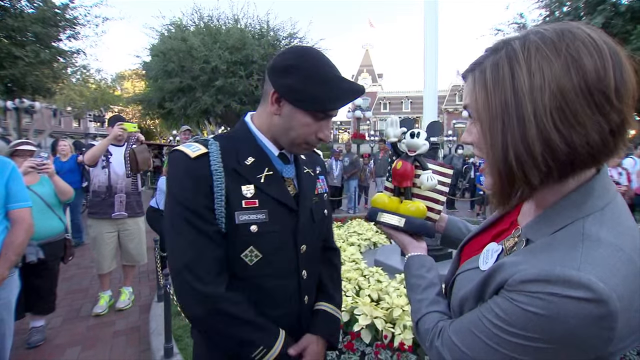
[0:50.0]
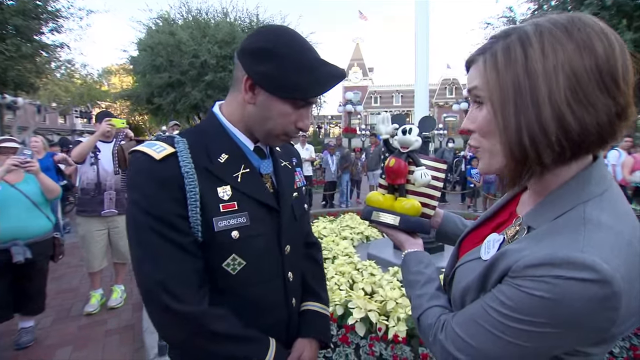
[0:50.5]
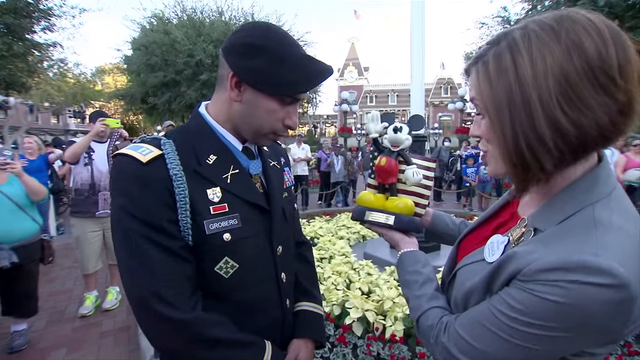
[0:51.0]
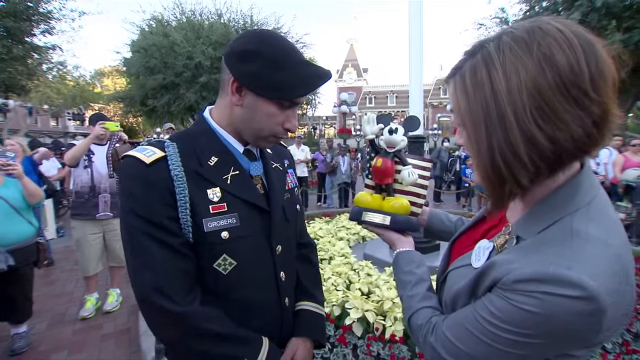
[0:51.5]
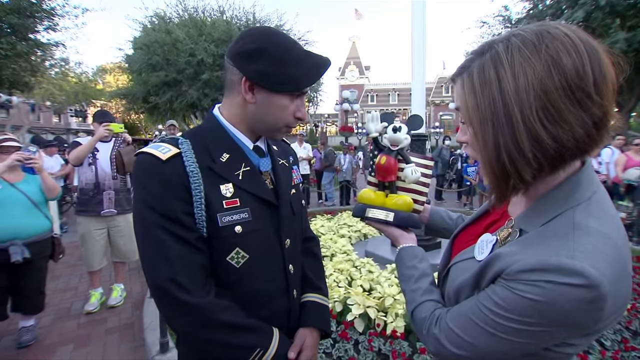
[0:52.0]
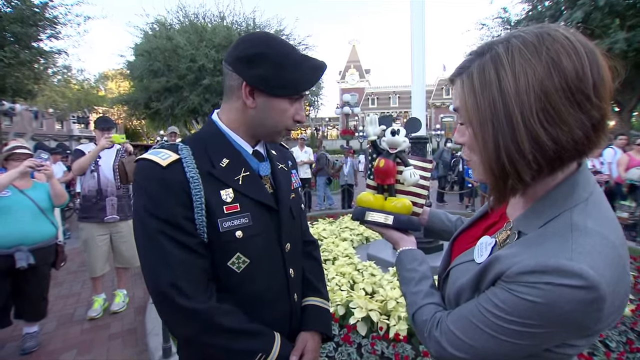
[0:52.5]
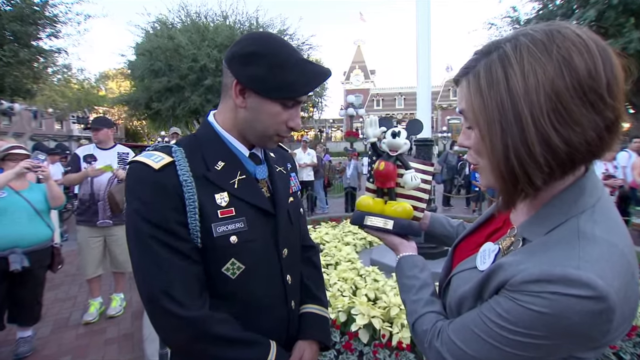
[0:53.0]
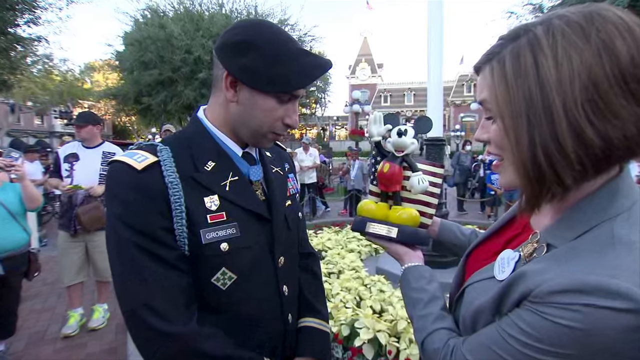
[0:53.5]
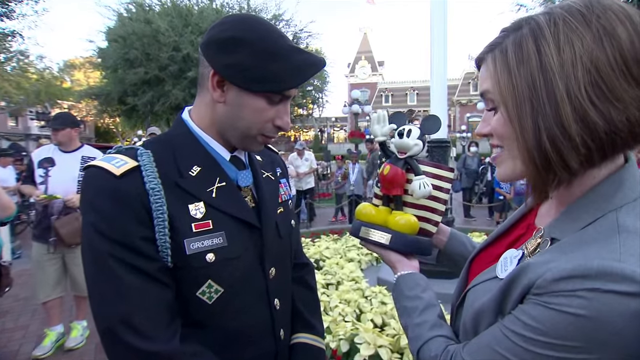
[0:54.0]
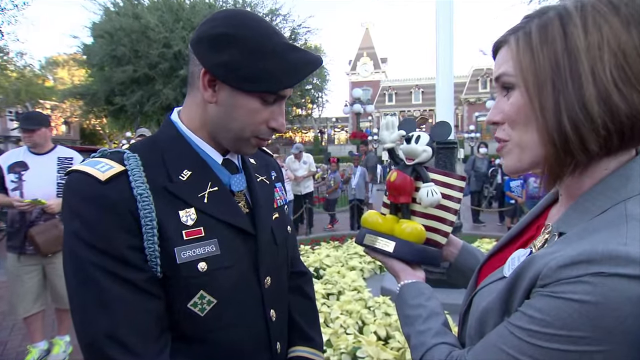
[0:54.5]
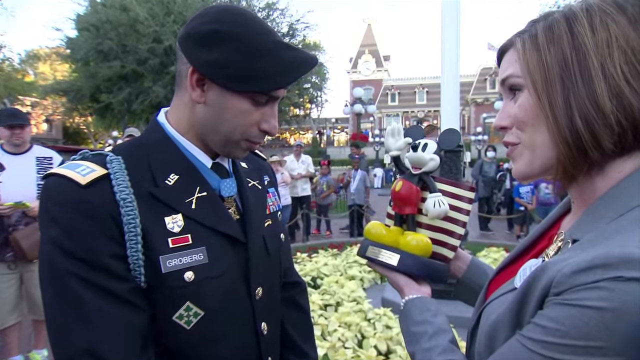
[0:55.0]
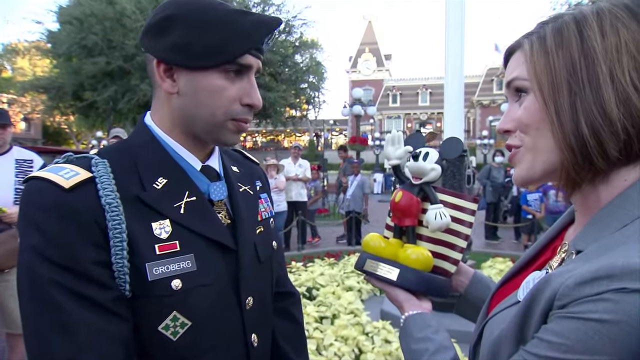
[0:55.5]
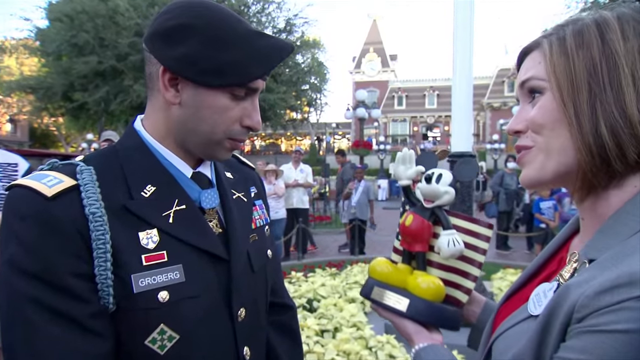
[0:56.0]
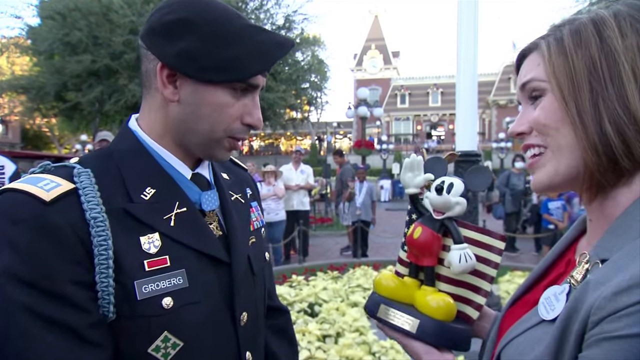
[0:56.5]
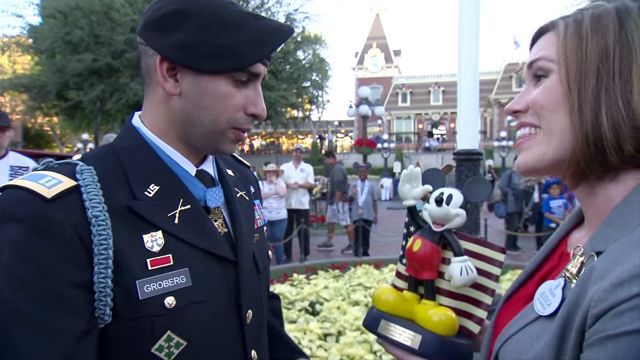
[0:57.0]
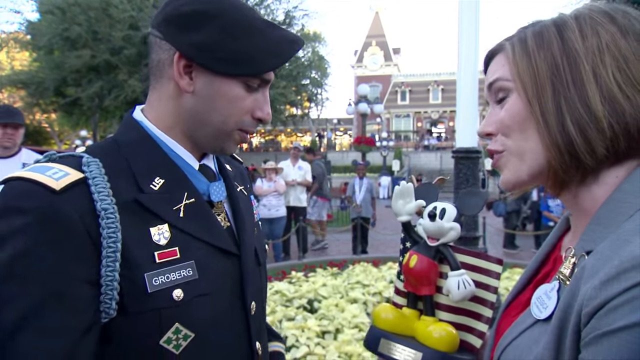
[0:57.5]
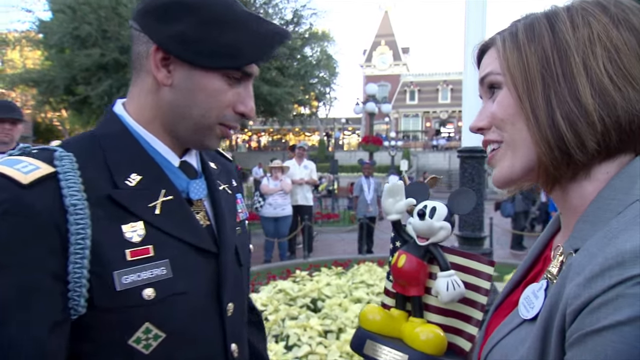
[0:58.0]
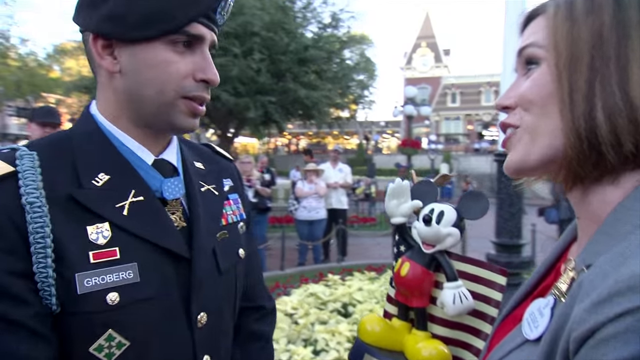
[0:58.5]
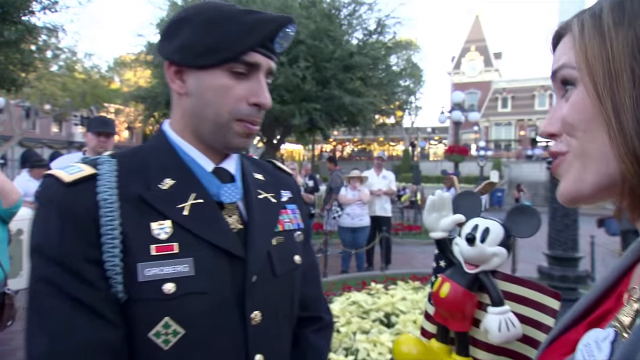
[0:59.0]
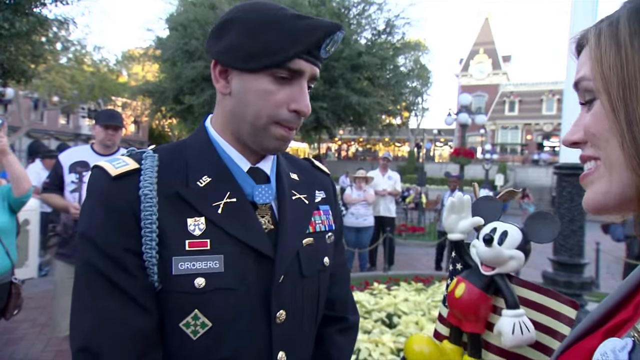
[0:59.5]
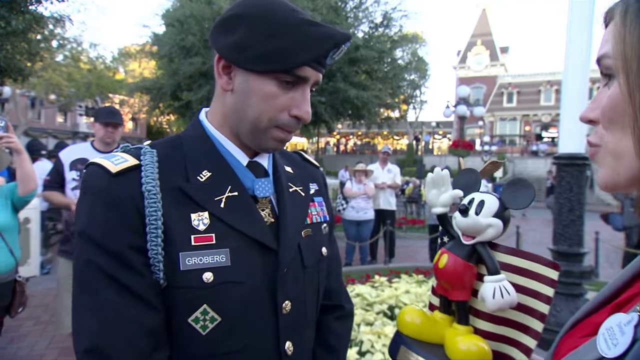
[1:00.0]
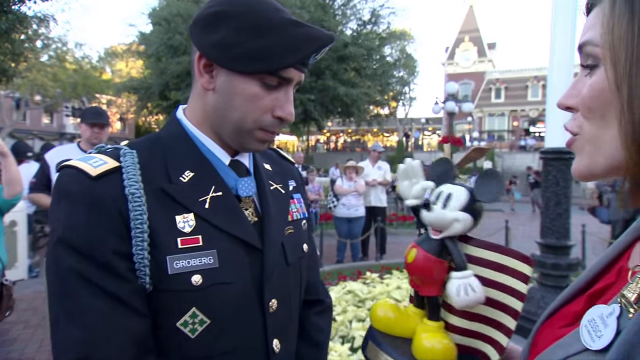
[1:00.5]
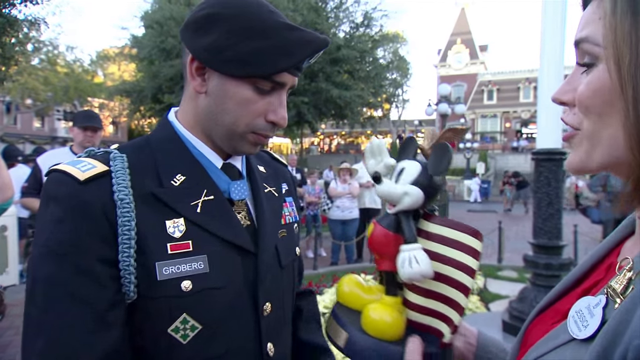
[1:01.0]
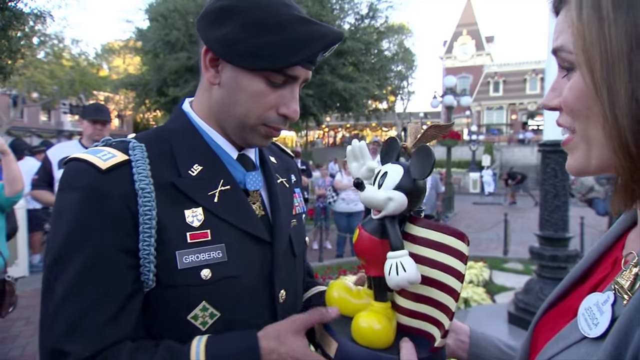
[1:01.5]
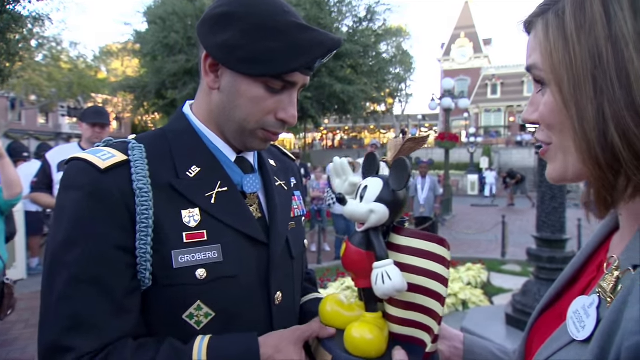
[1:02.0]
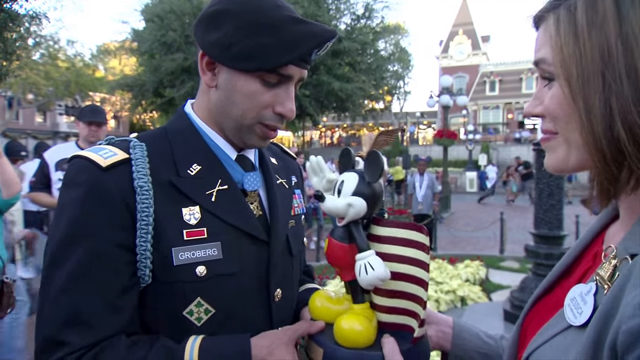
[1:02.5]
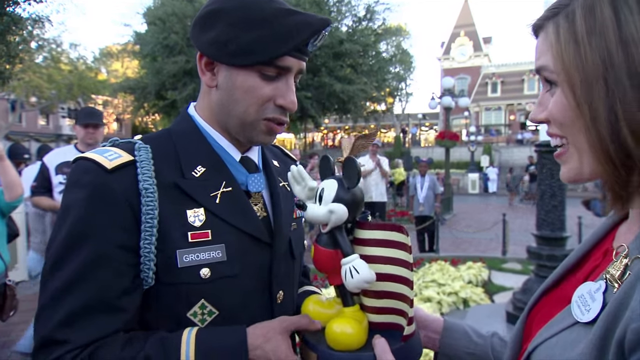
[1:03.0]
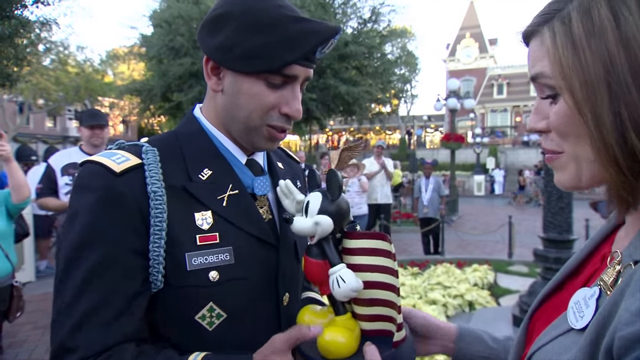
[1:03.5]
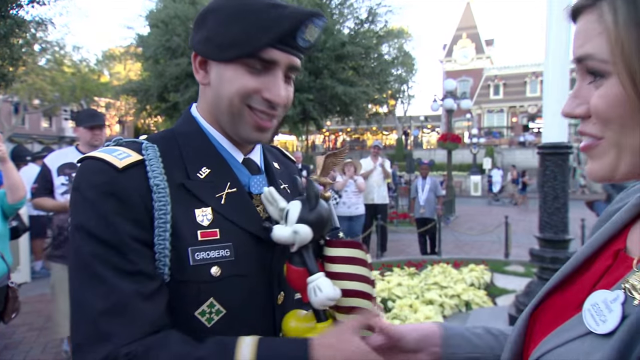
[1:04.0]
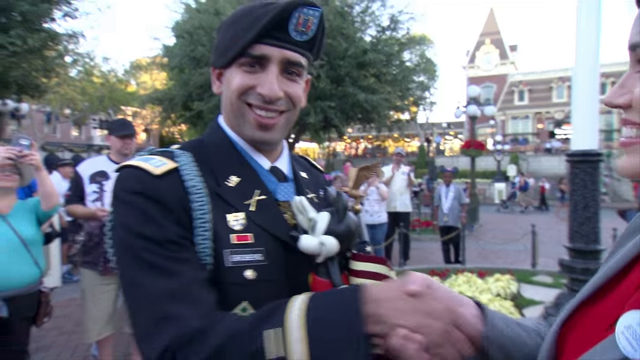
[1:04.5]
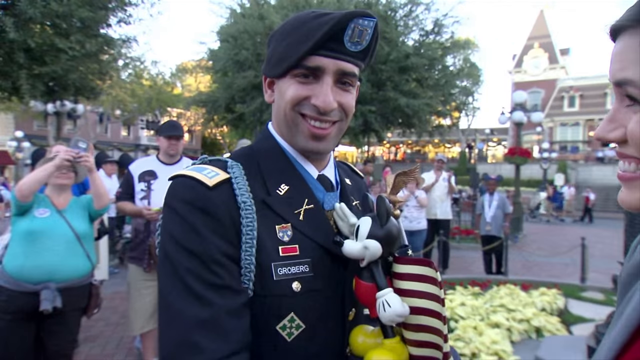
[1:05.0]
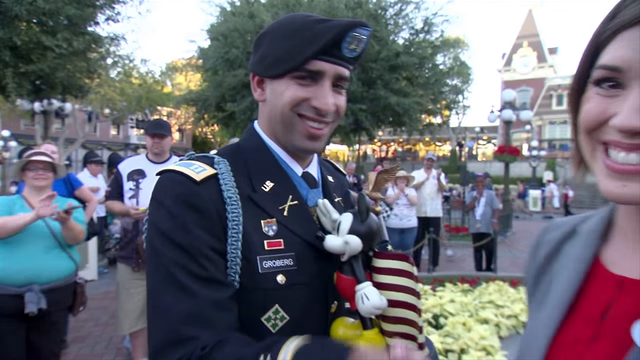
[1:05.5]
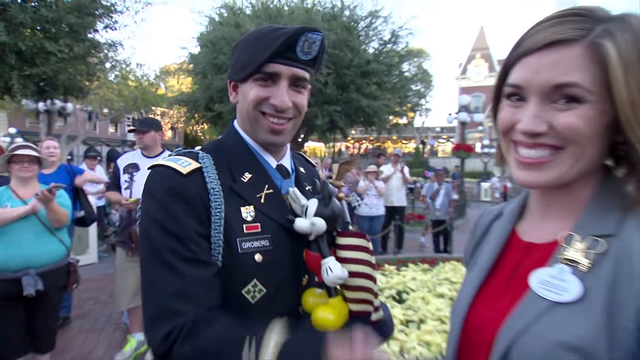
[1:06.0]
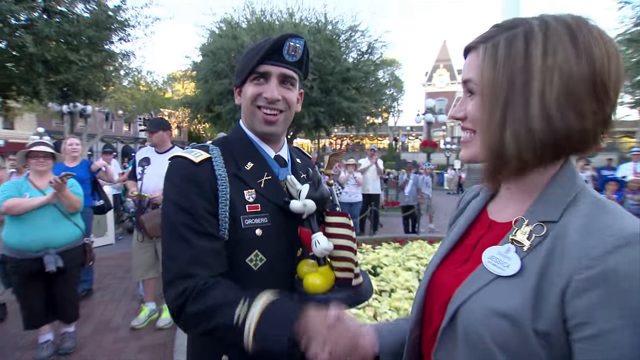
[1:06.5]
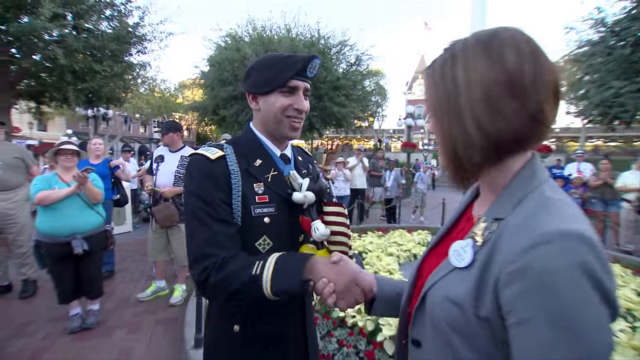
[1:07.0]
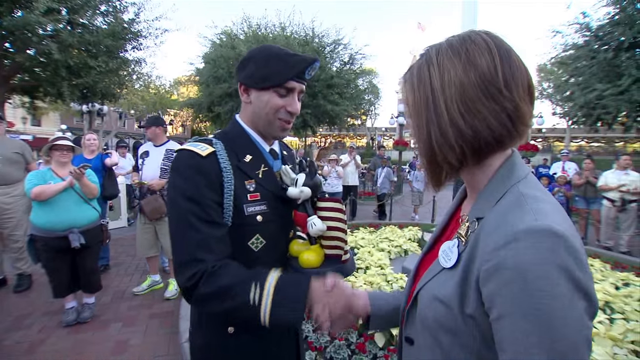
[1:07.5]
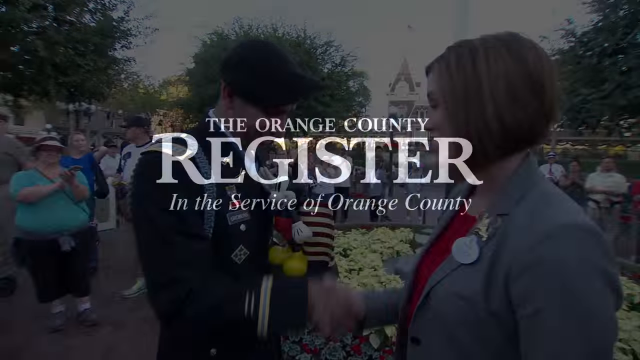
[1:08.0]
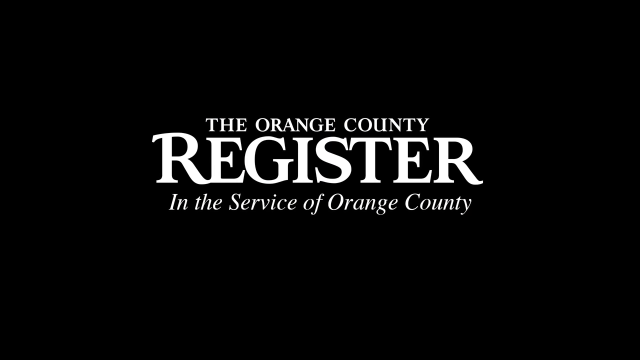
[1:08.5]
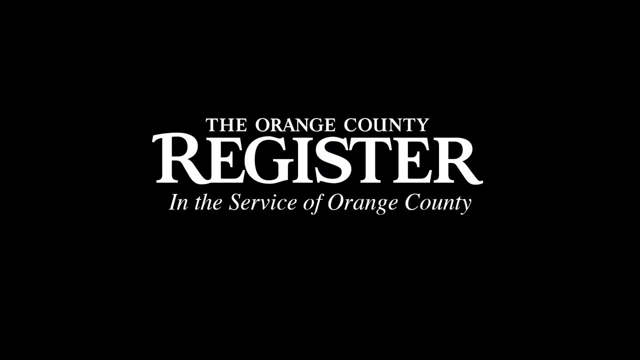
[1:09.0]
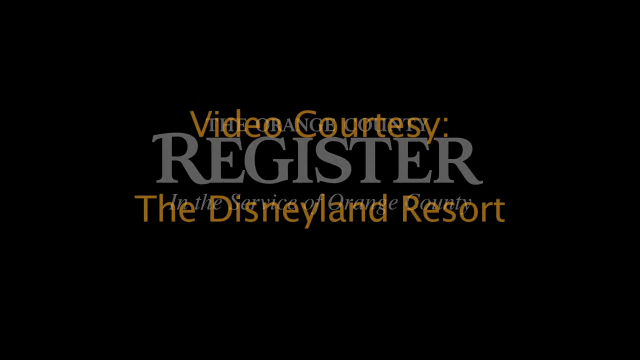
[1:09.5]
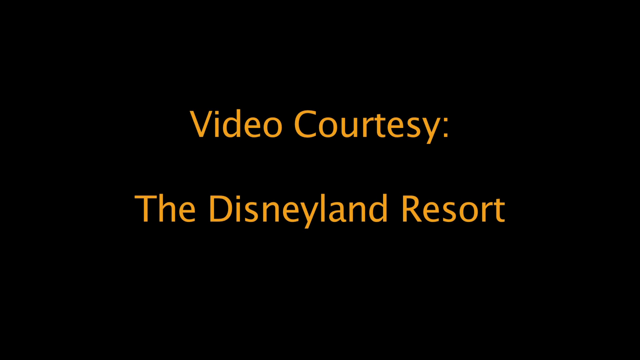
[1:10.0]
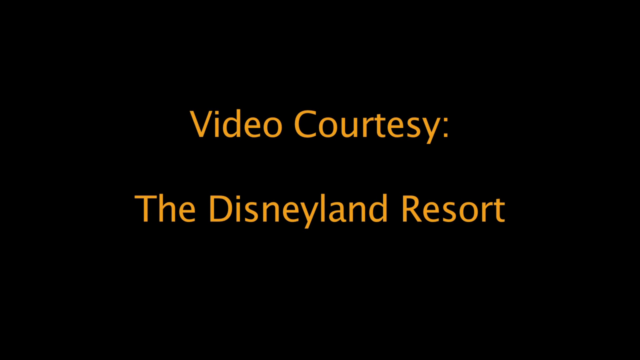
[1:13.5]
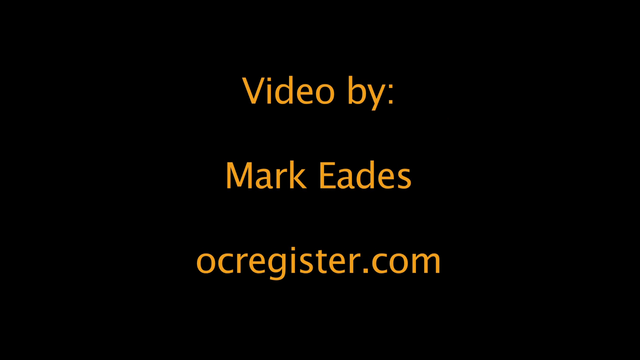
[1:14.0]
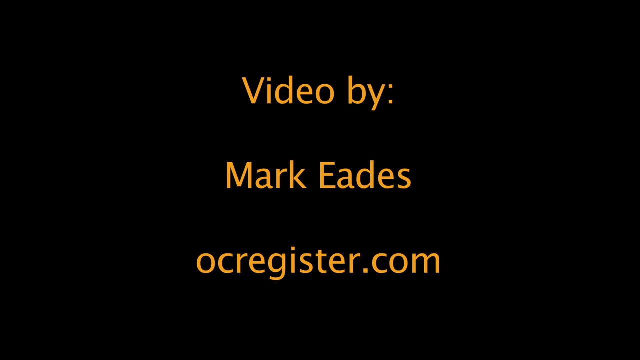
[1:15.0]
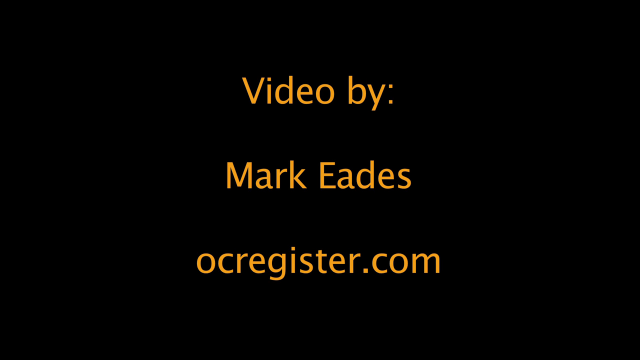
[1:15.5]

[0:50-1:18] The woman continues to hold the statue and talk to Captain Groberg, who nods as she speaks. She then gives it to him, he shakes her hand, and both look to the camera and smile. The video ends with the same Orange County Register logo from the start, followed by gold lettering reading "Video courtesy, the Disneyland Resort" and text reading "Video by Mark Edis, OCRegister.com." Groberg wears a very official black military uniform: a blazer with stripes on the cuffs, a blue braid going around his shoulder and under his armpit, and many medals. The top of a white collar is visible, and a name tag reading "Groberg" is on his right side. He appears to wear a black tie with something blue over it near the knot, unclear whether a ribbon or possibly a medal on a blue ribbon around his neck.